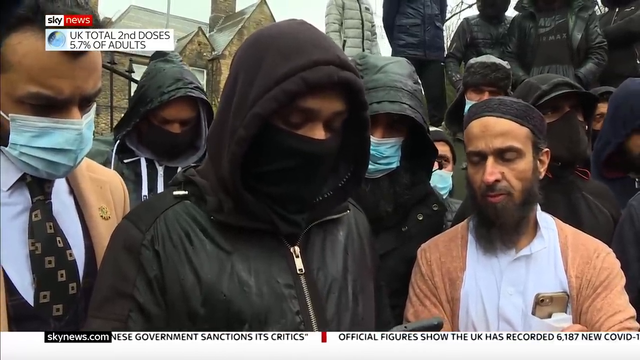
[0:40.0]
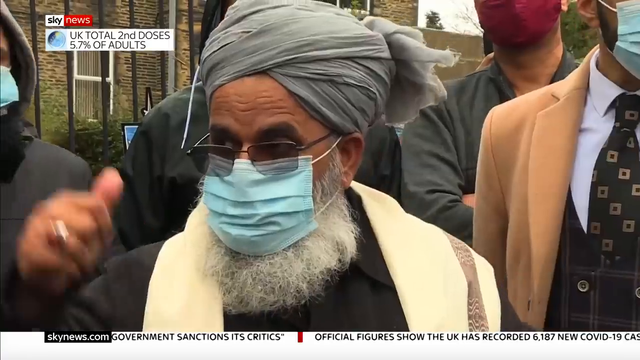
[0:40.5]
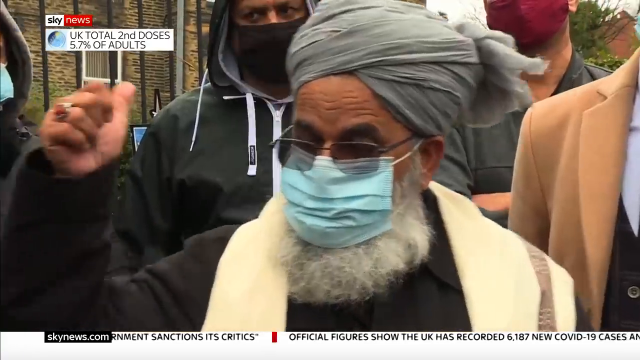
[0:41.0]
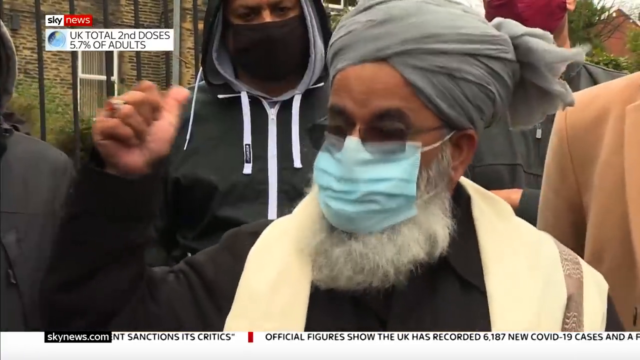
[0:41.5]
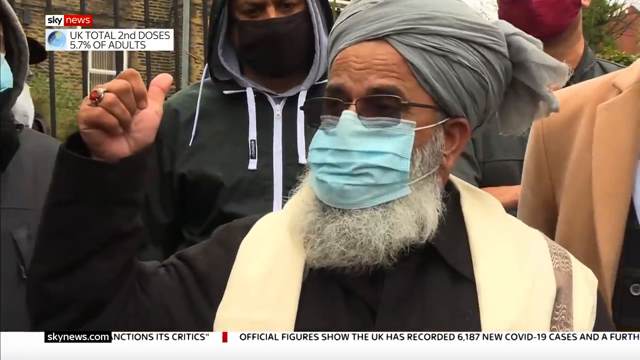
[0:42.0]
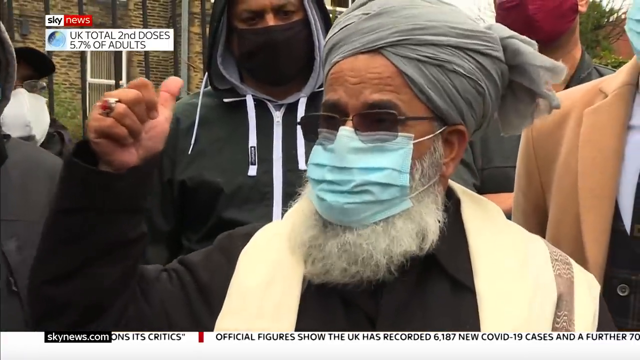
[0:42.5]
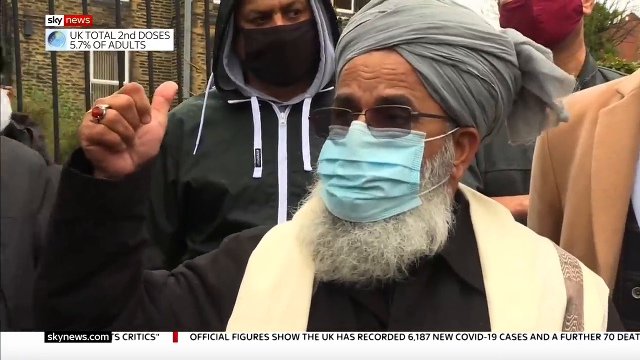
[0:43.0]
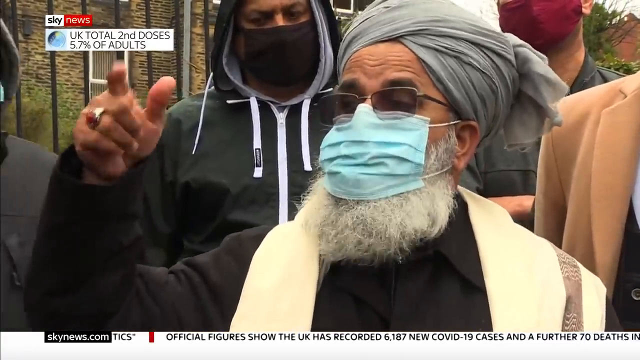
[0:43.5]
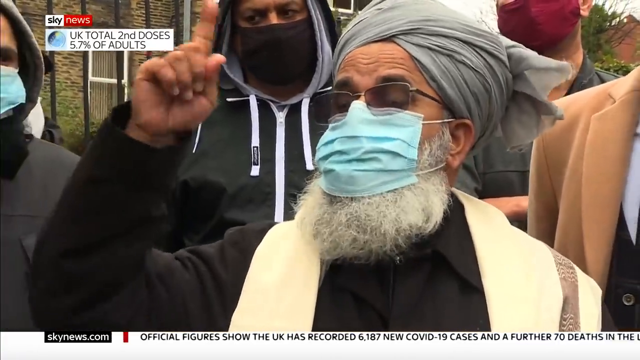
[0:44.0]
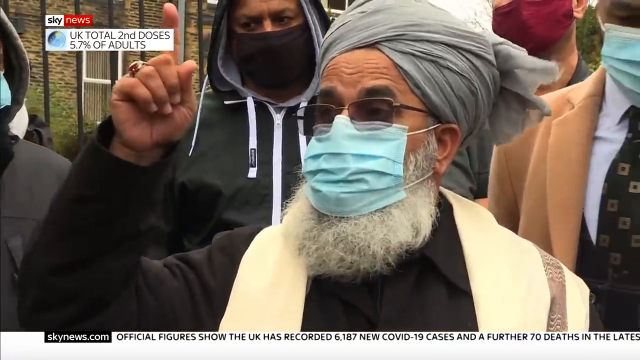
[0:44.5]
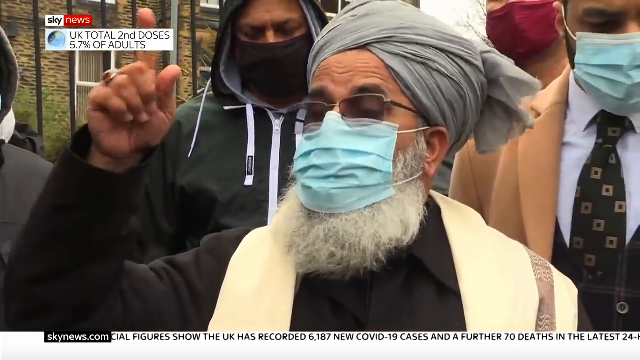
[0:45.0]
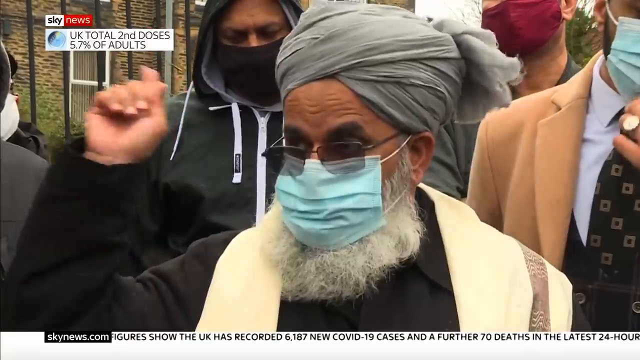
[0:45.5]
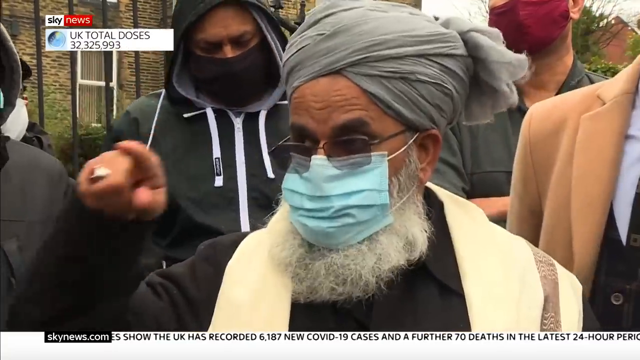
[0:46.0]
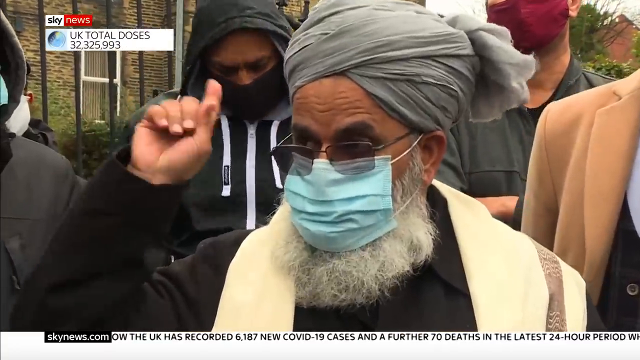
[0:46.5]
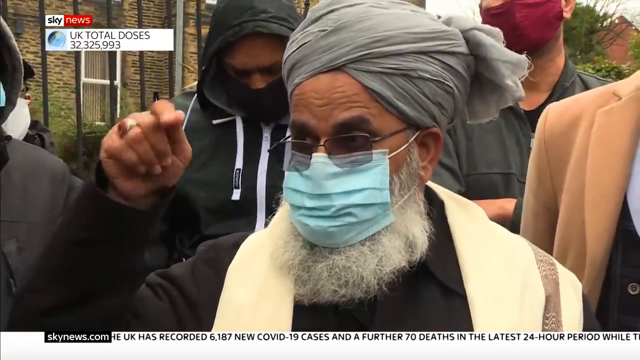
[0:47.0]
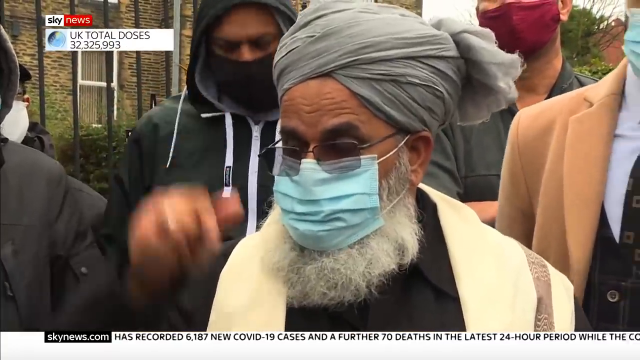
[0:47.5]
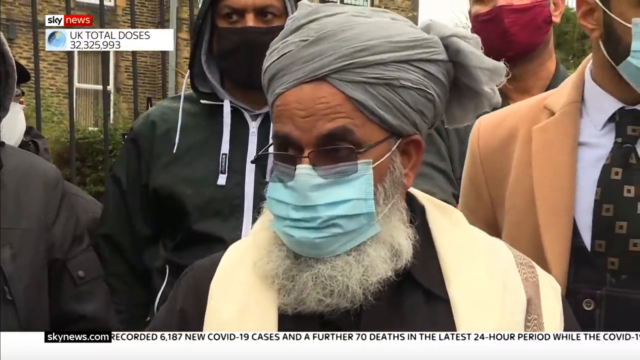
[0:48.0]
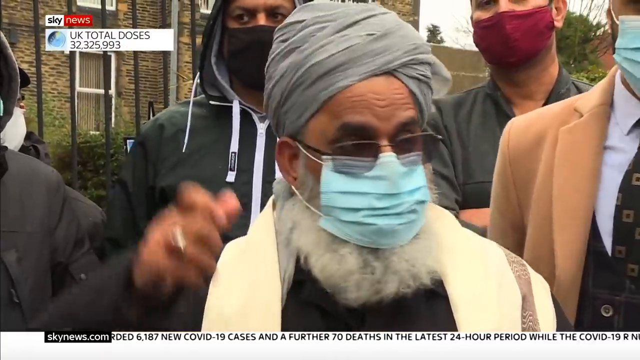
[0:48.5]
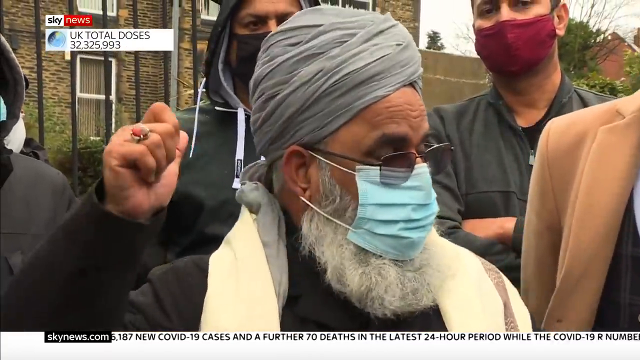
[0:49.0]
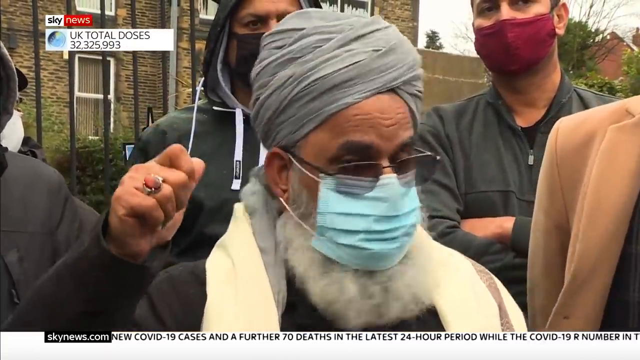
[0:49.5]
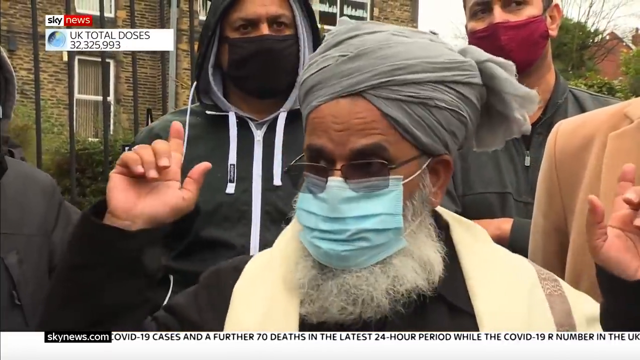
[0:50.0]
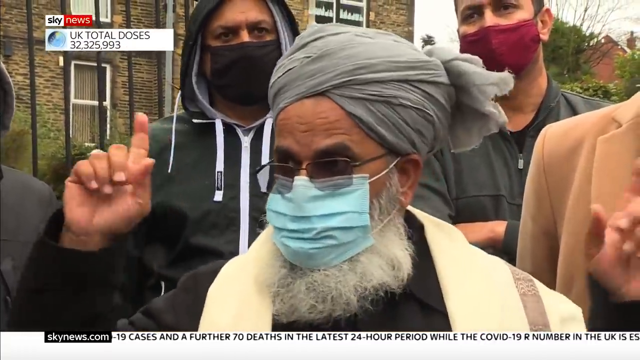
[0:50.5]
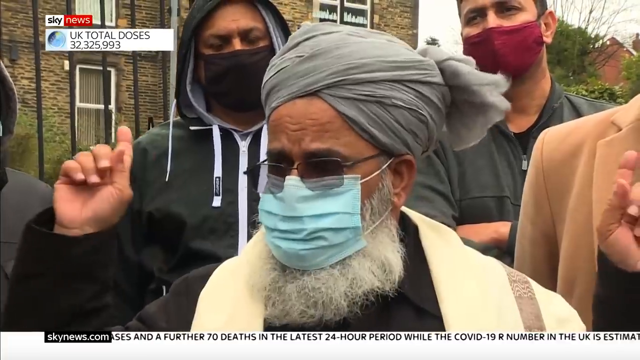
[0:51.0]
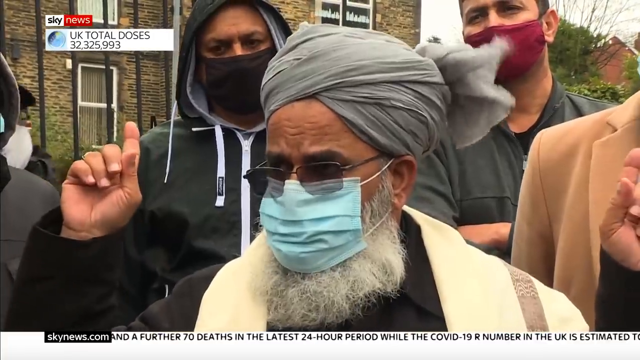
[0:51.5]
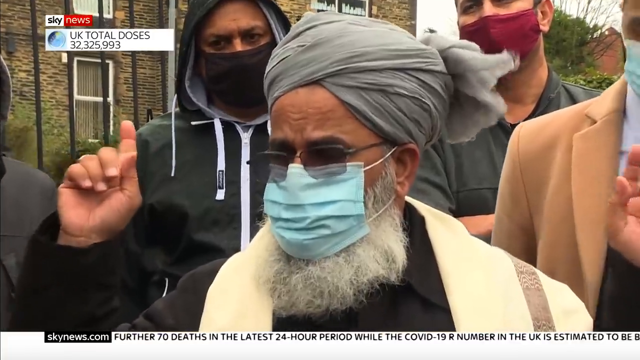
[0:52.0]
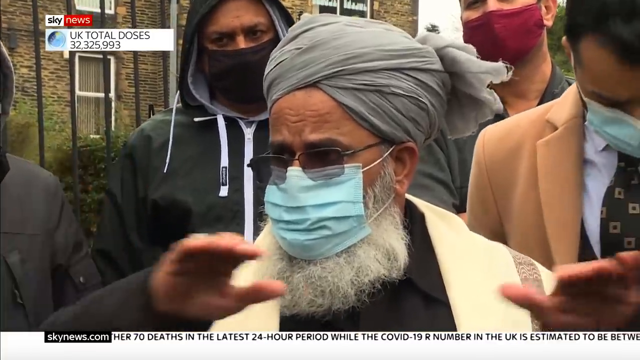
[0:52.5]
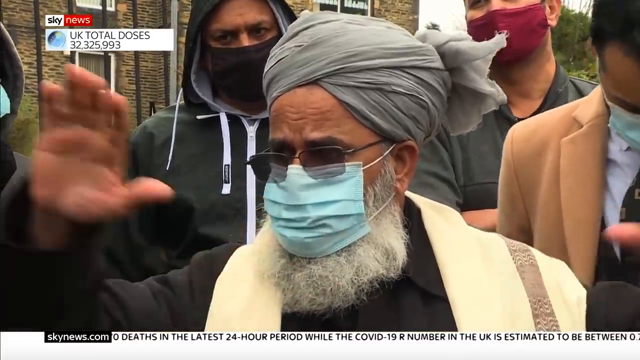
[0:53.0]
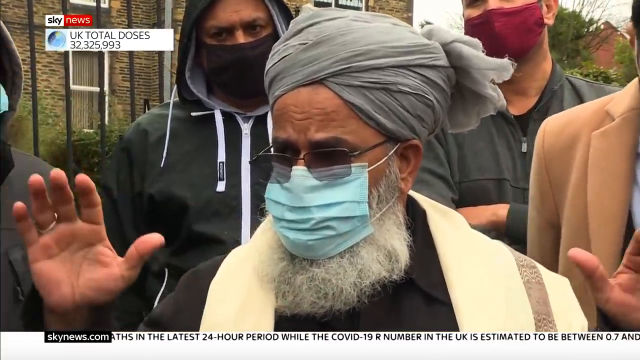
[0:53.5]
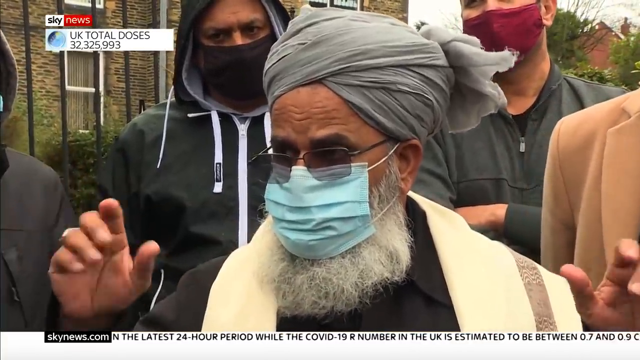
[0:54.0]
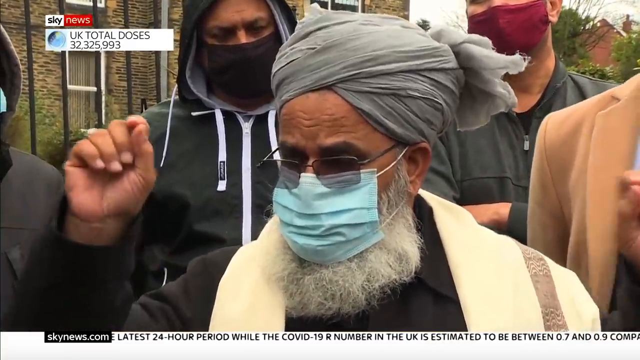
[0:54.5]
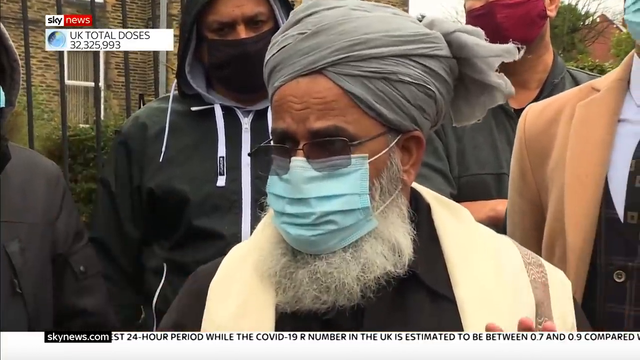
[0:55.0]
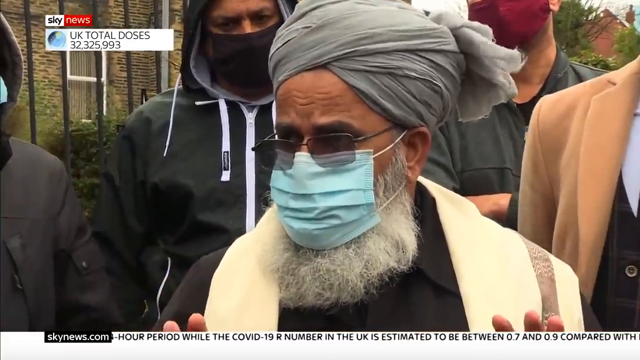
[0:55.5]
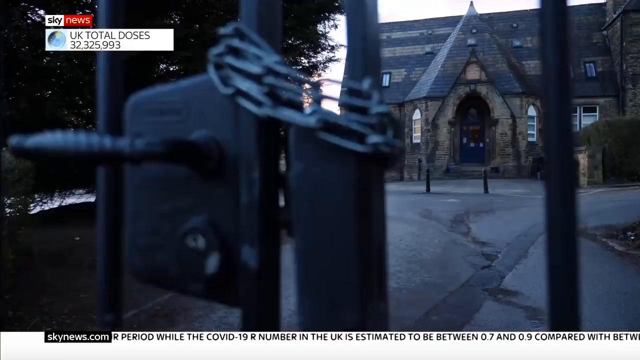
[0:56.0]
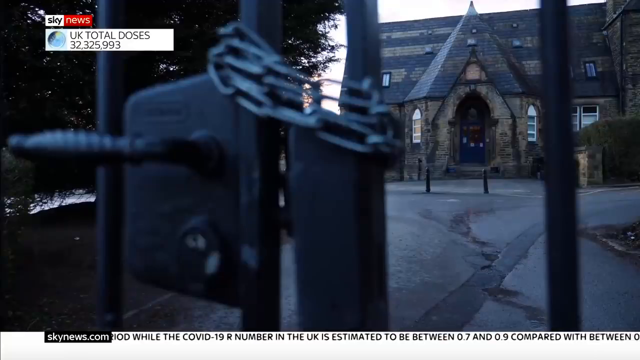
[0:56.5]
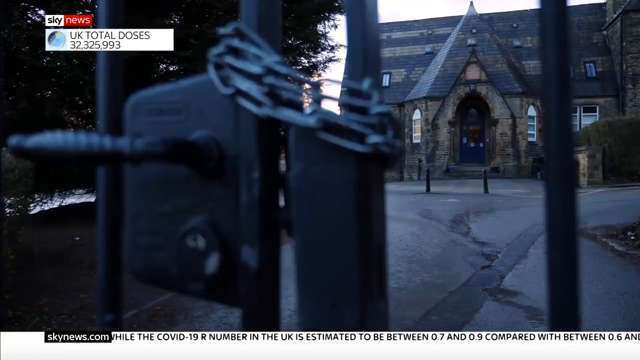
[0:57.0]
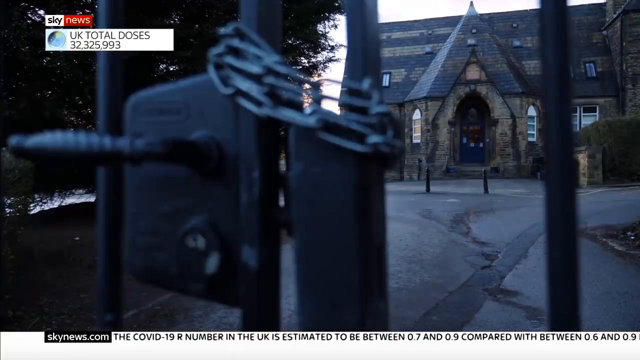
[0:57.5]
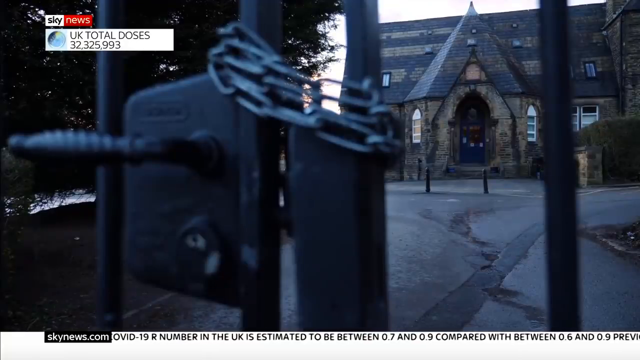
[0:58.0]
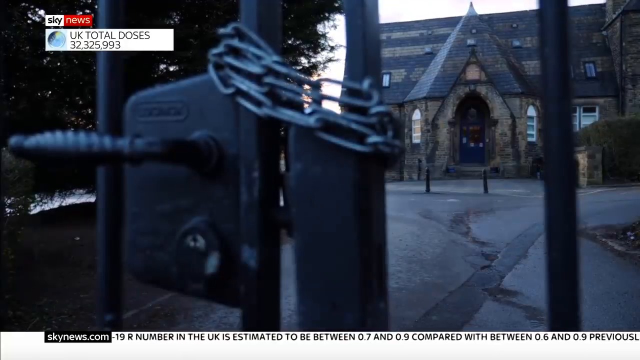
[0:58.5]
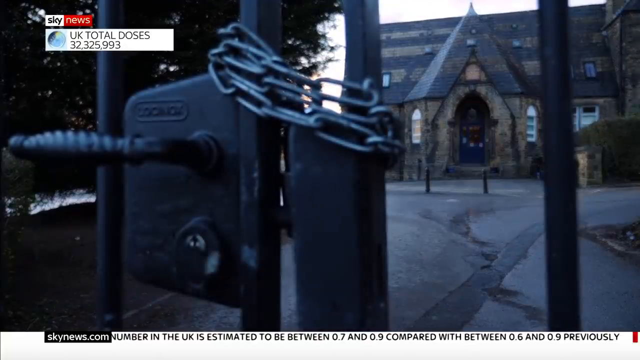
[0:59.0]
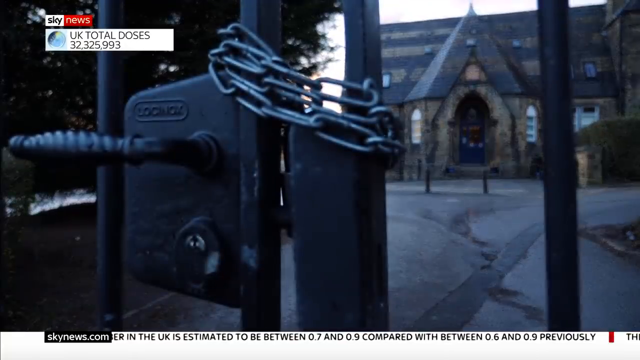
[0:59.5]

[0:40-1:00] The Sky News broadcast shows a second-dose figure of "5.7 percent of adults" in the top left. The man is still reading something from his phone, surrounded by other people. They wear masks and heavy clothes; from this angle only a few, about two, are not wearing masks. In the background is an ancient building that looks like a school. An old Arab man wearing glasses, a turban and a blue mask speaks, holding his thumb up as if signifying power, then points up while speaking to the crowd. Text shows "UK total doses 32,325,993". More people wear masks in the same setting with the building in the background. The building is then shown closed with no one inside, and chains are on the gates.